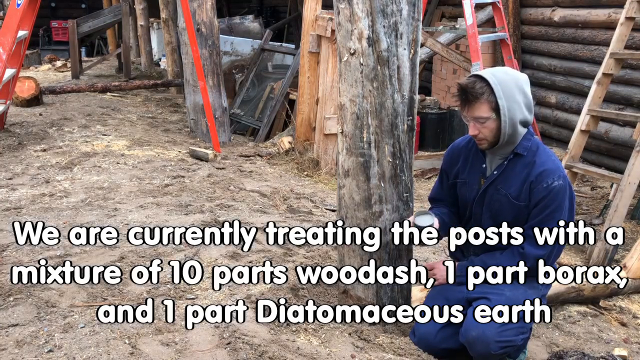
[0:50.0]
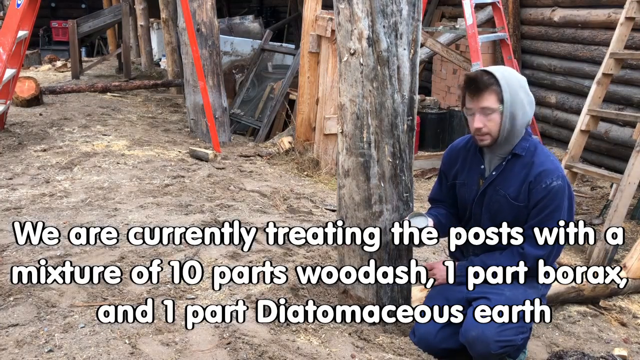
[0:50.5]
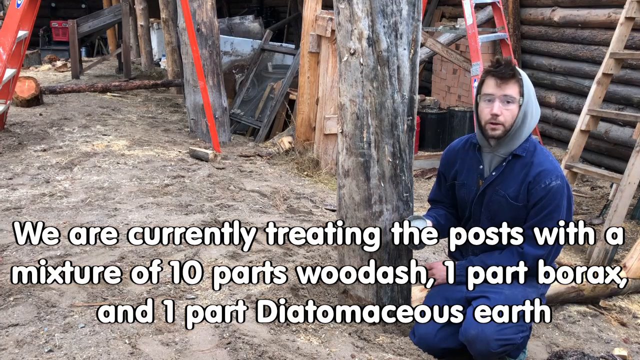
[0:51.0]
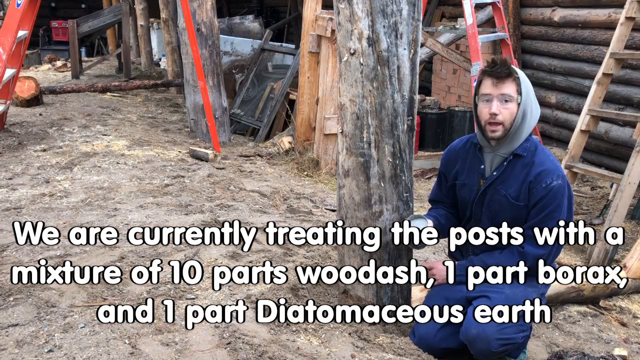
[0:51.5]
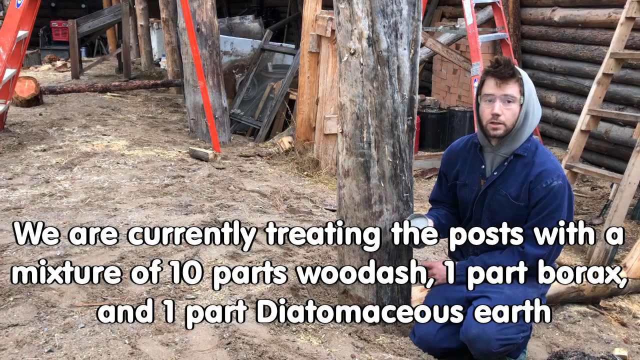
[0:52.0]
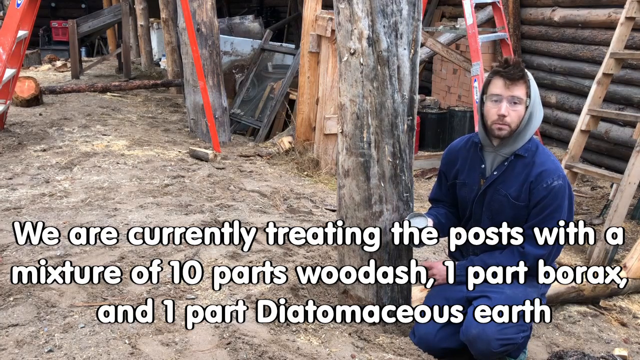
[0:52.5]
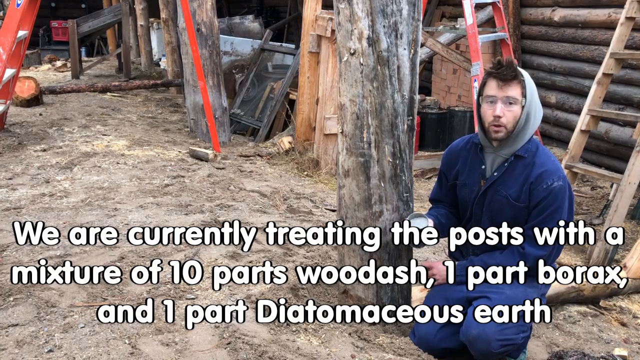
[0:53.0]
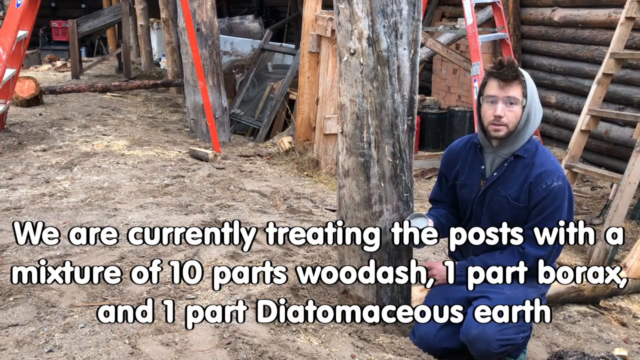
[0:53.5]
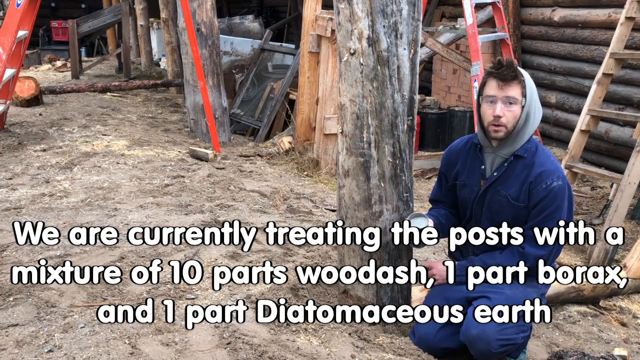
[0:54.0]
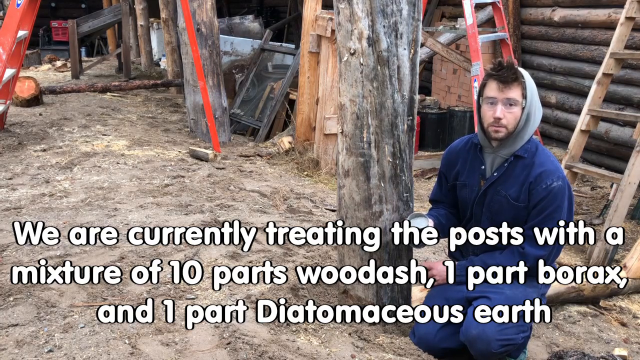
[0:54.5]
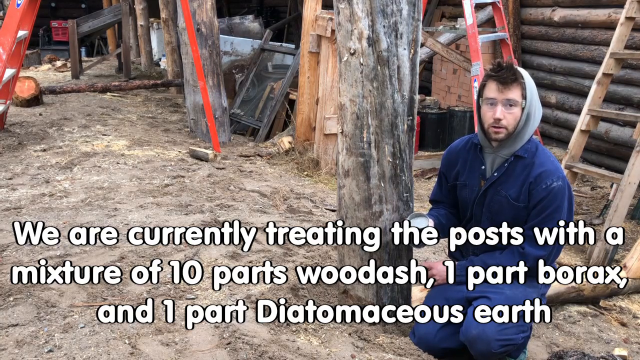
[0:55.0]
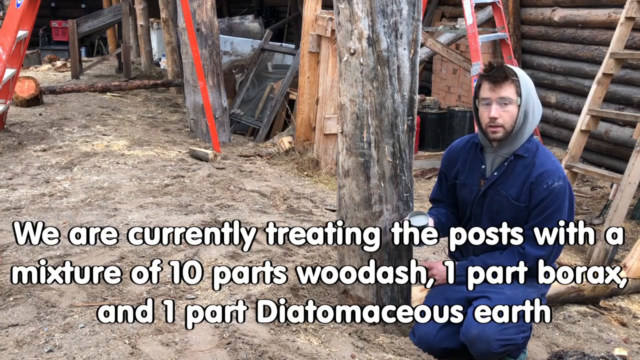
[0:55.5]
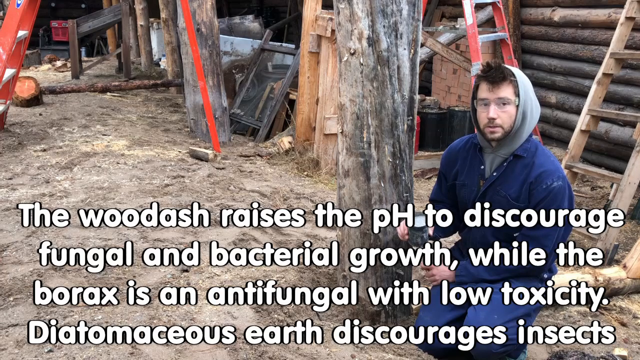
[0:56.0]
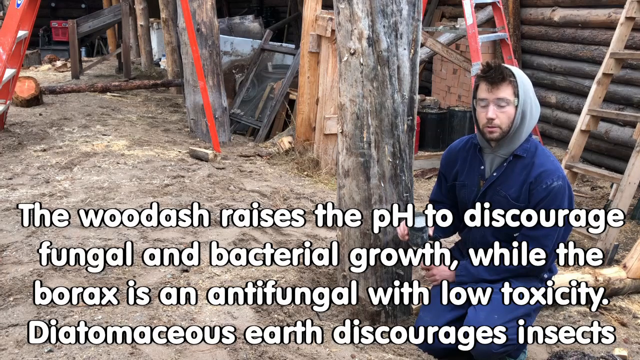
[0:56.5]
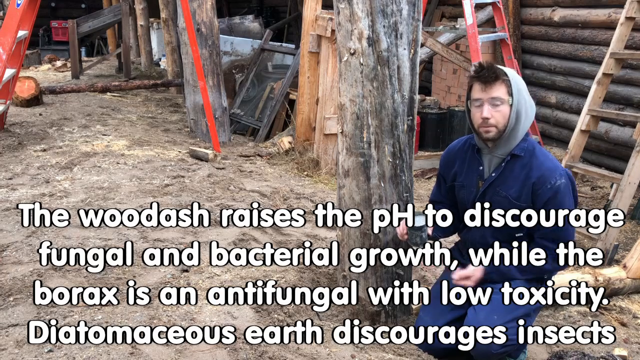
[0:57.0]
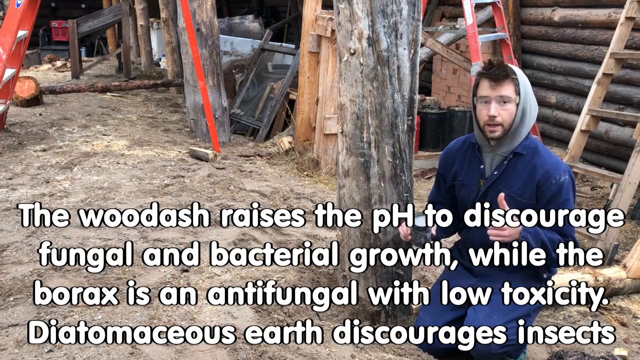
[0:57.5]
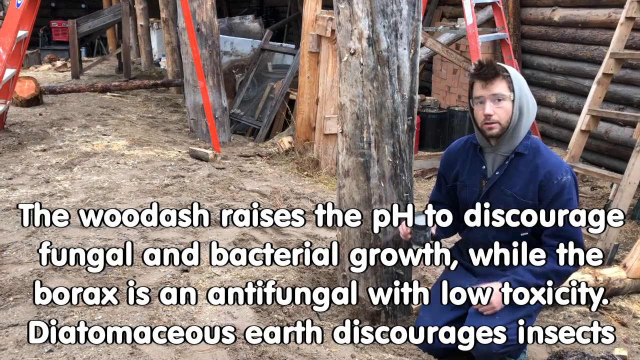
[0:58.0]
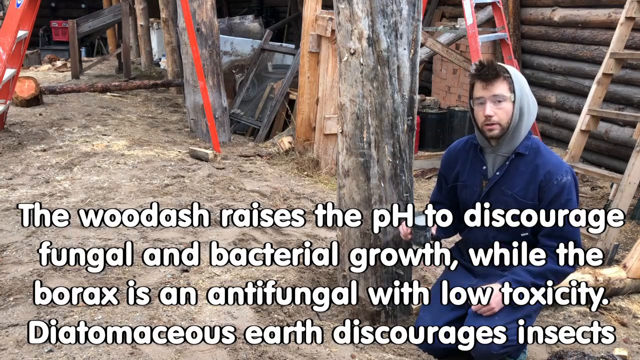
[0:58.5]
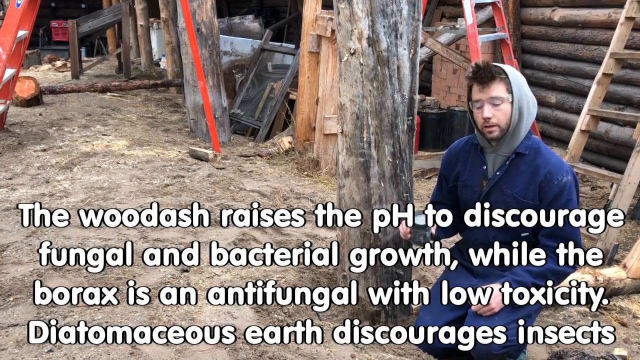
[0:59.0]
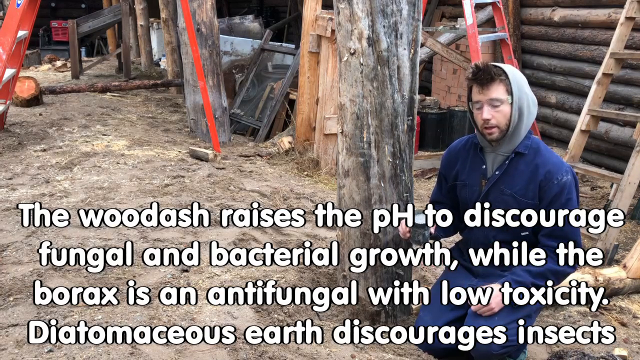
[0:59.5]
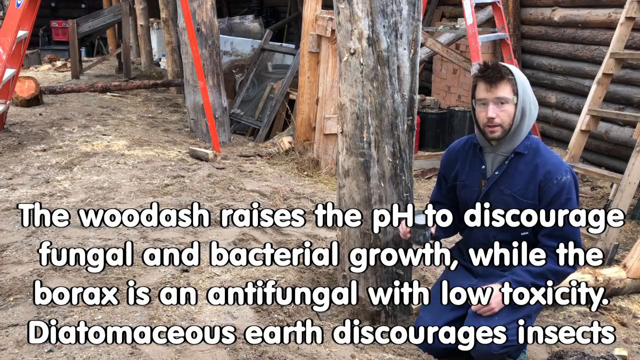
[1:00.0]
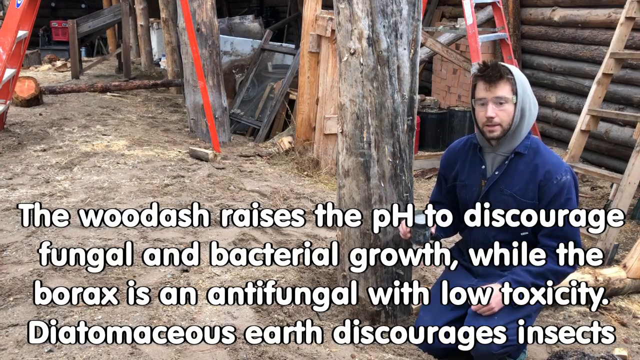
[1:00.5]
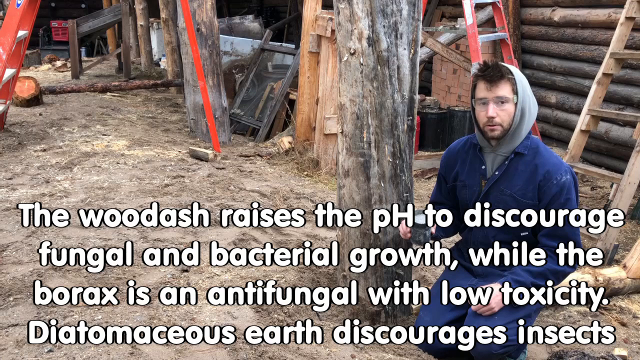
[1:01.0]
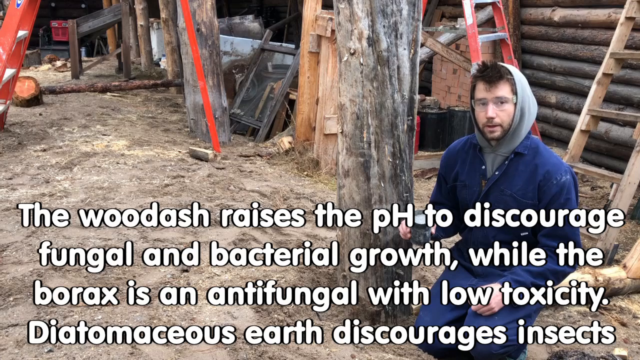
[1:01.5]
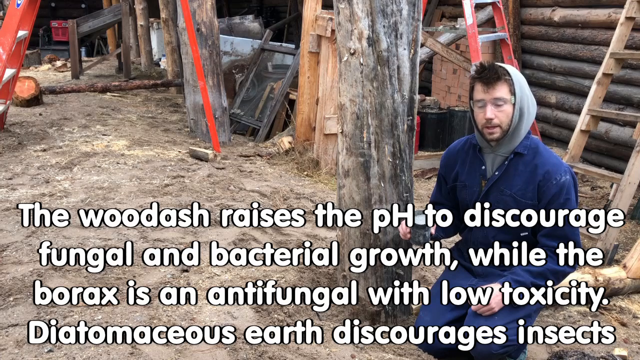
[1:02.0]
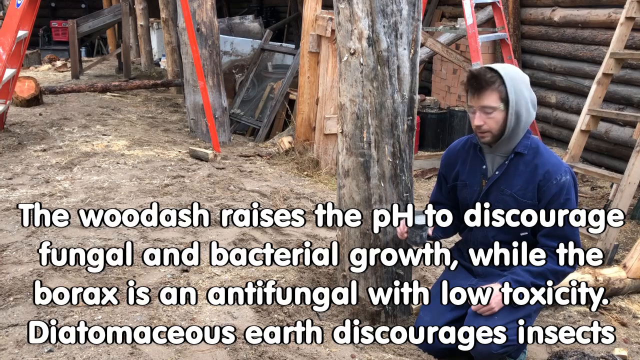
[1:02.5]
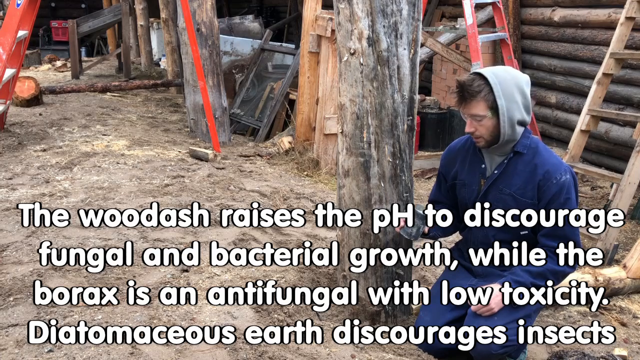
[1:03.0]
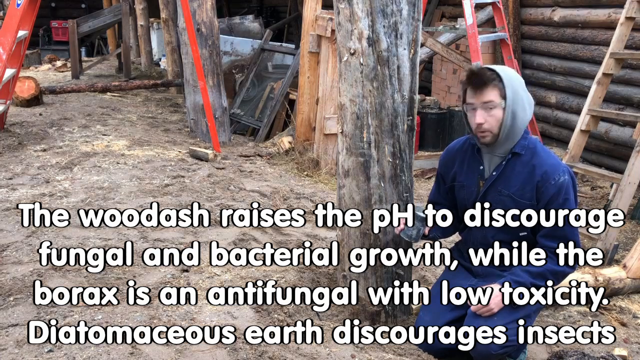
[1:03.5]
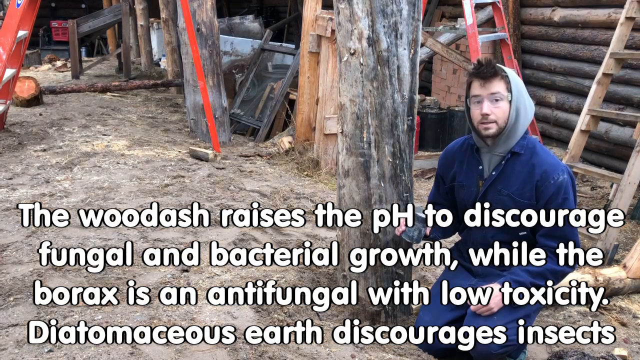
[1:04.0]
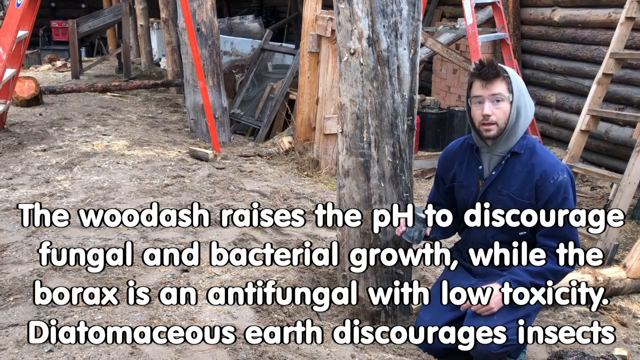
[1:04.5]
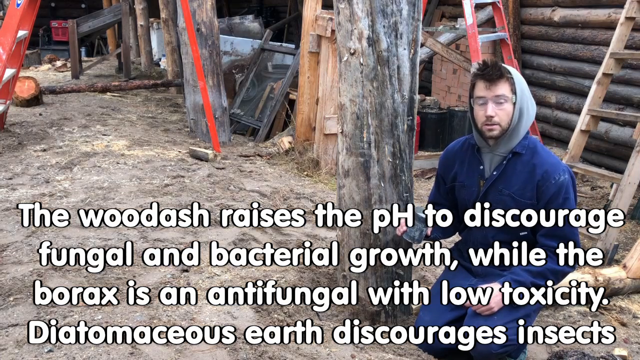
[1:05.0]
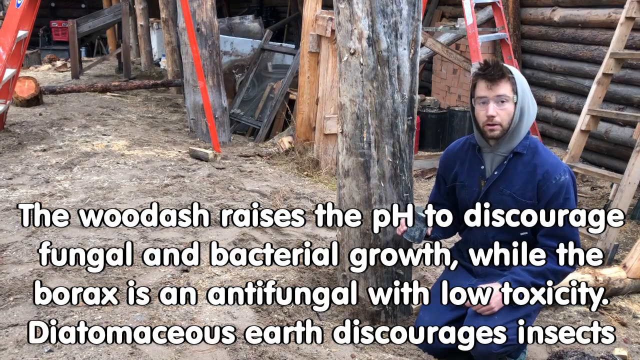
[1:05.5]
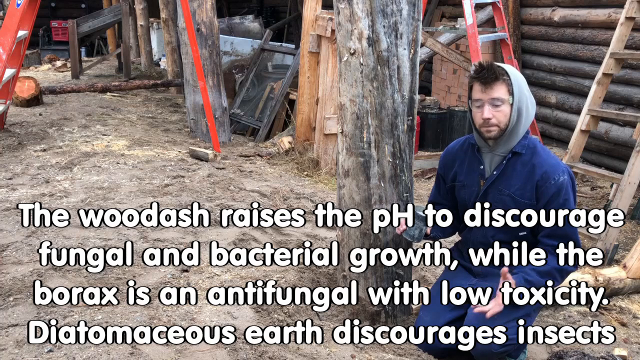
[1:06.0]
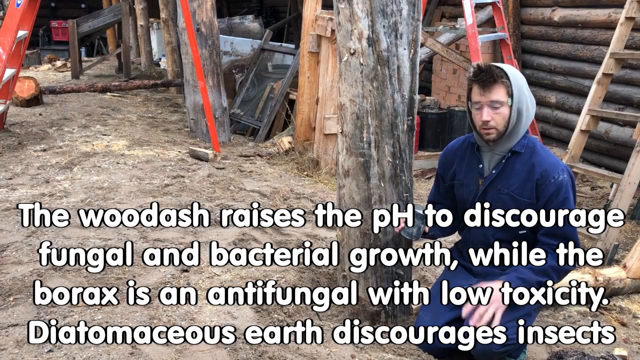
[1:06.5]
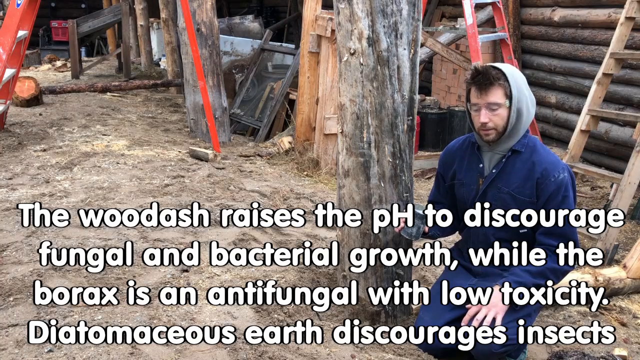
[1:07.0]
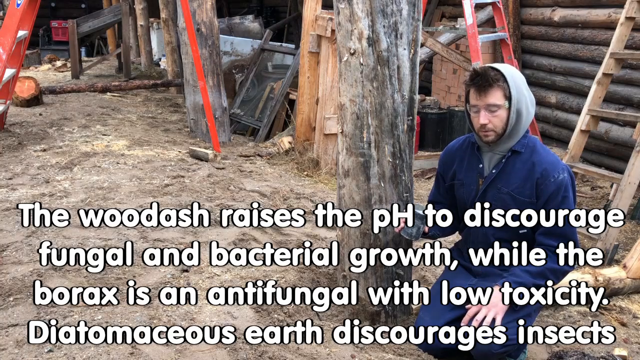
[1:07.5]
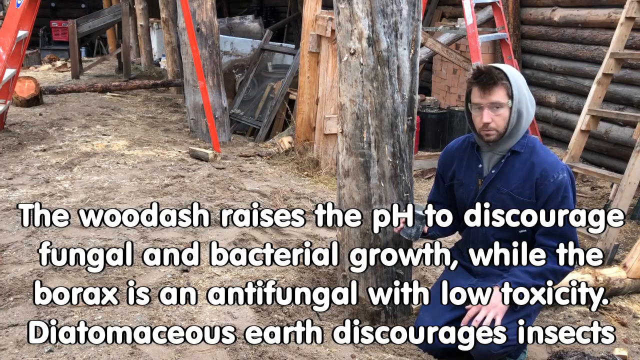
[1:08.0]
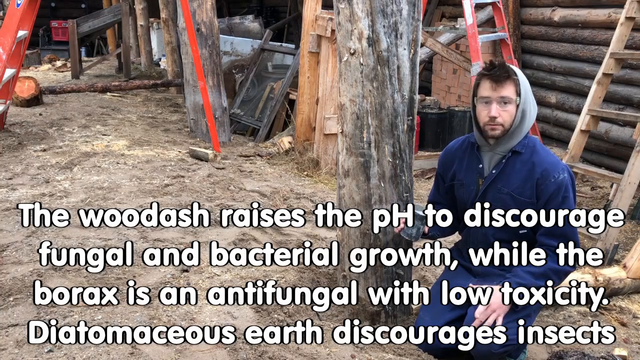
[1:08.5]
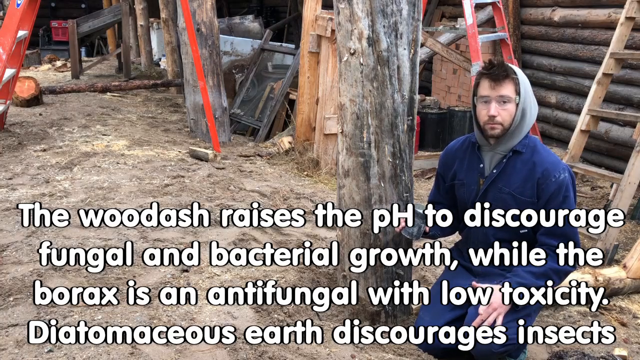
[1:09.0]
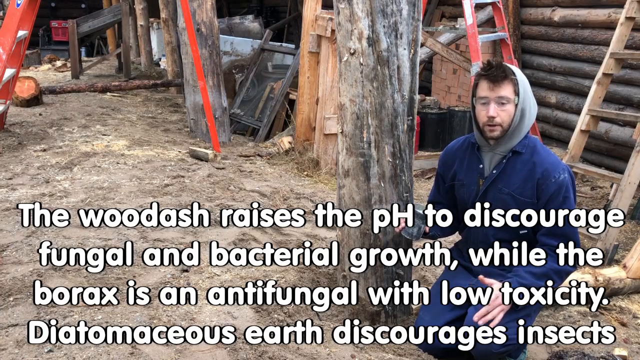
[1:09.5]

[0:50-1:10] A man kneels next to a large wooden post installed in the ground. Behind him is a structure made of logs, and similar posts are lined up in a row parallel to the post next to him. He holds a metal can with some kind of liquid in his right hand and occasionally looks down at it as he speaks to the camera. Captions across the screen describe what he is saying and the process being shown. They appear in two separate scenes and in their entirety read, "We are currently treating the posts with a mixture of 10 parts woodash, 1 part borax, and 1 part Diatomaceous earth. The woodash raises the pH to discourage fungal and bacterial growth, while the borax is an anti-fungal with low toxicity. Diatomaceous earth discourages insects."